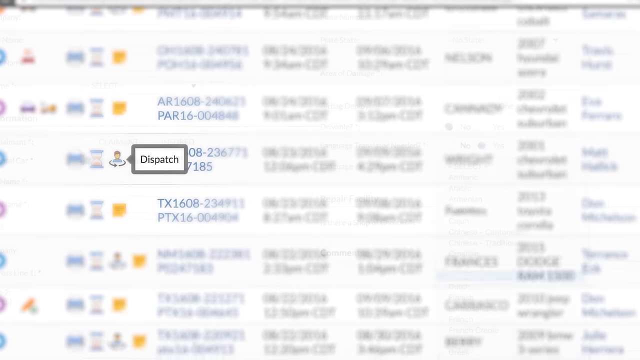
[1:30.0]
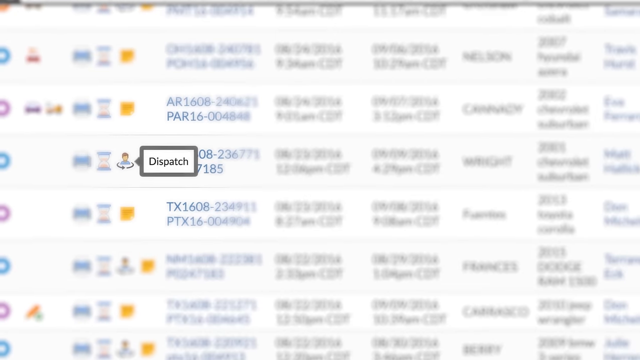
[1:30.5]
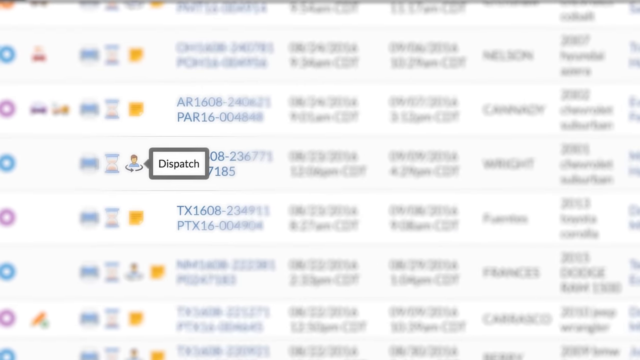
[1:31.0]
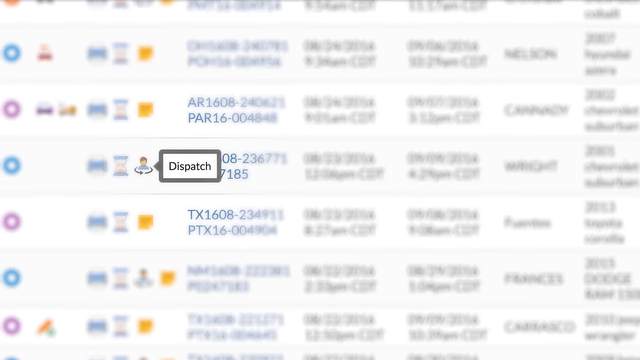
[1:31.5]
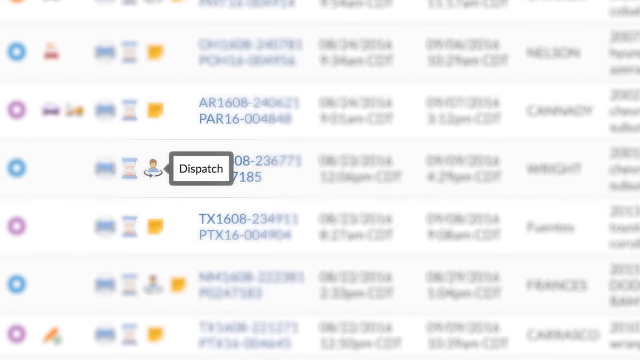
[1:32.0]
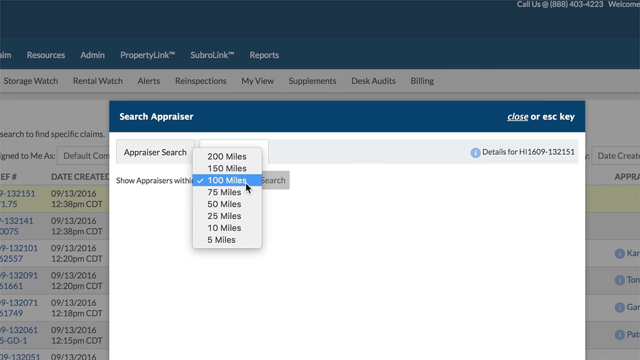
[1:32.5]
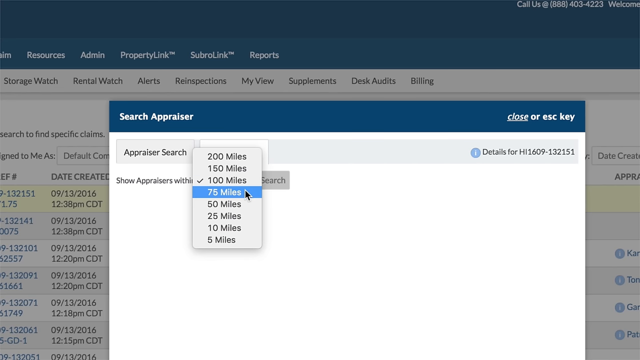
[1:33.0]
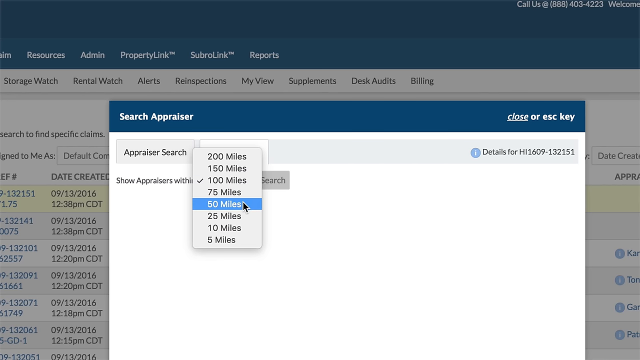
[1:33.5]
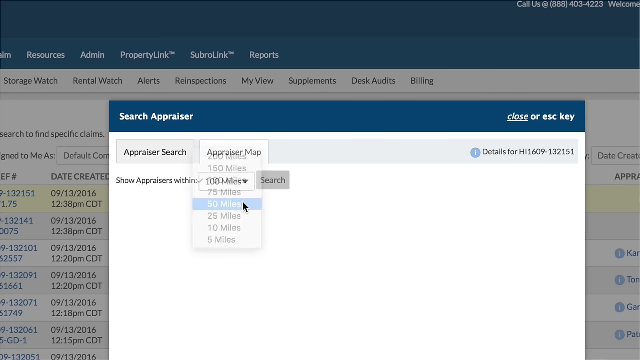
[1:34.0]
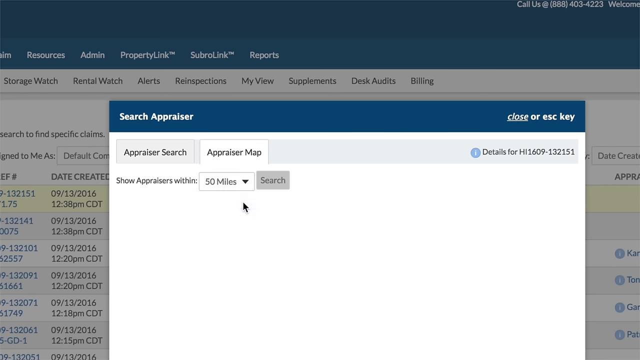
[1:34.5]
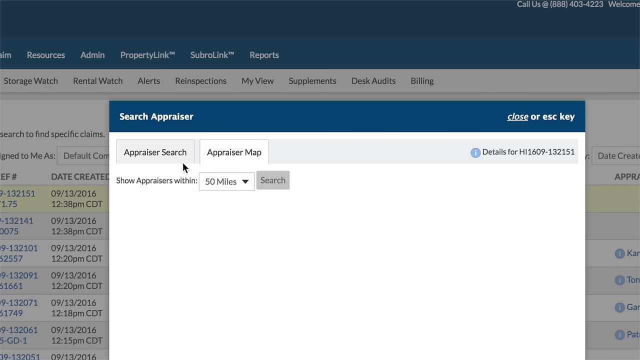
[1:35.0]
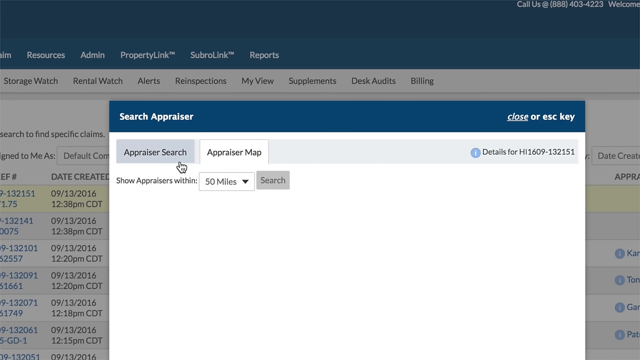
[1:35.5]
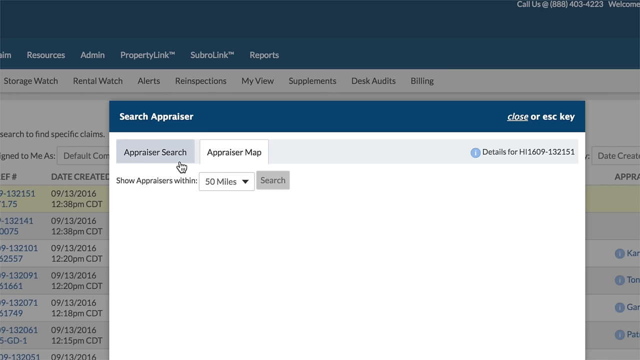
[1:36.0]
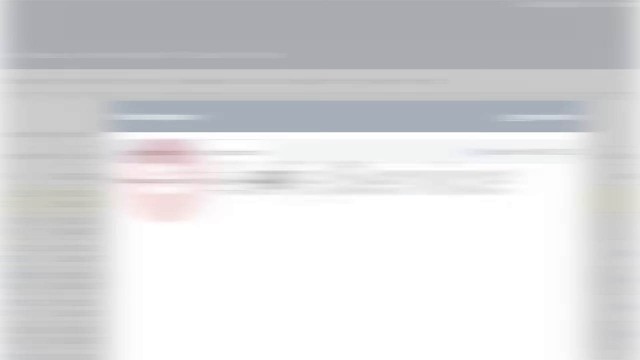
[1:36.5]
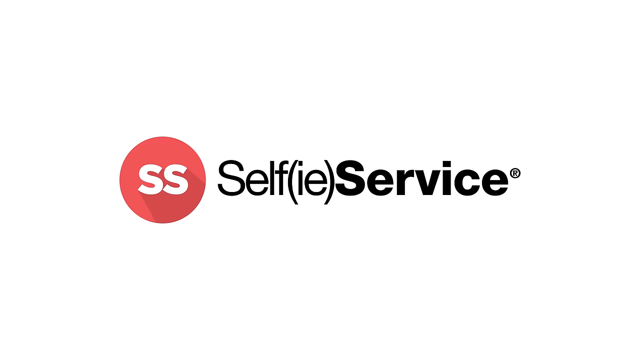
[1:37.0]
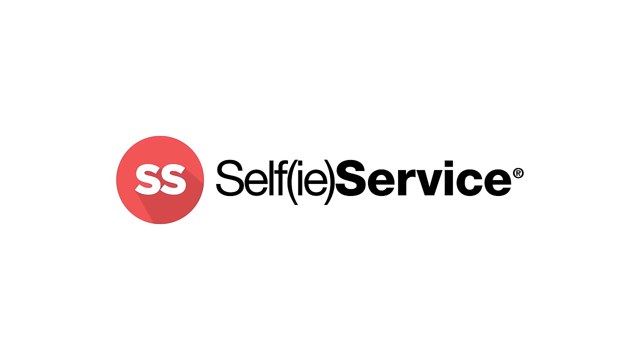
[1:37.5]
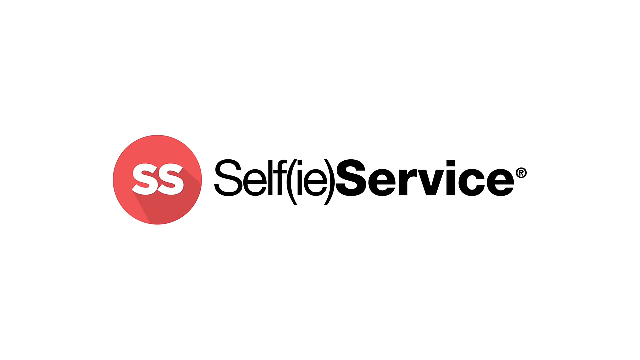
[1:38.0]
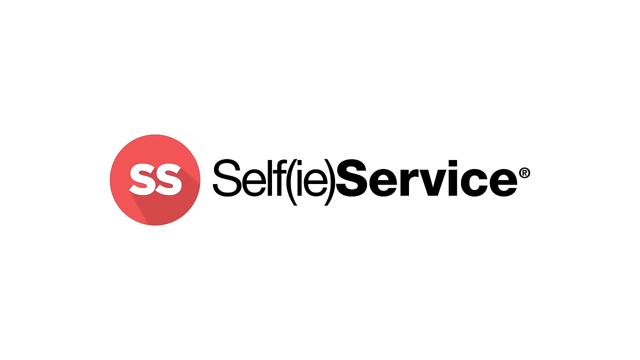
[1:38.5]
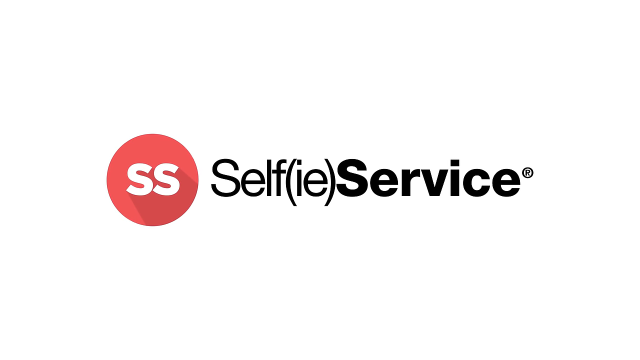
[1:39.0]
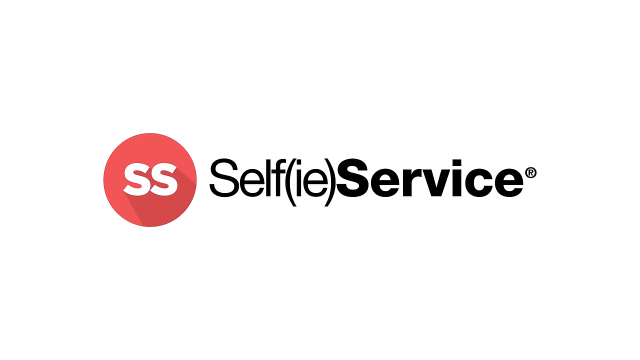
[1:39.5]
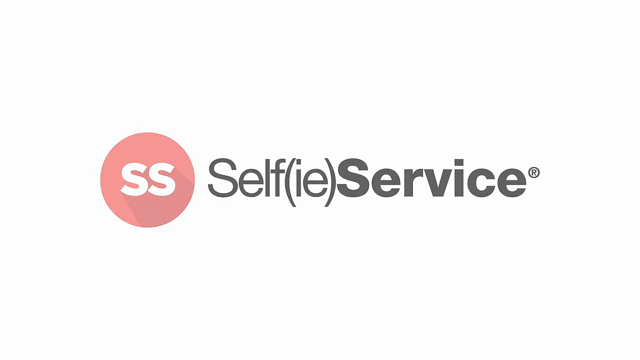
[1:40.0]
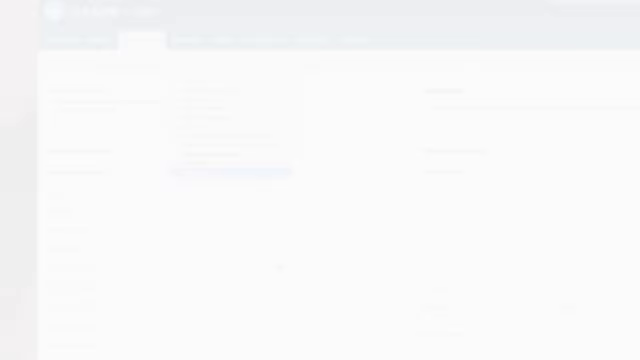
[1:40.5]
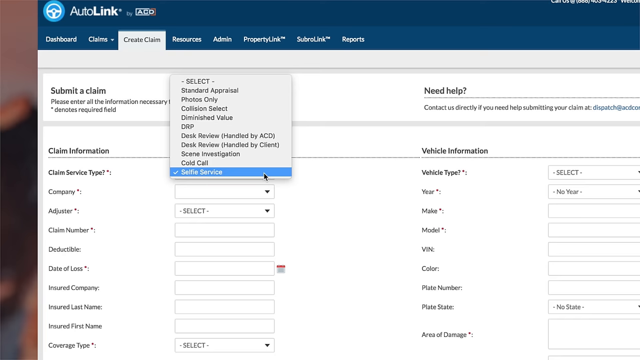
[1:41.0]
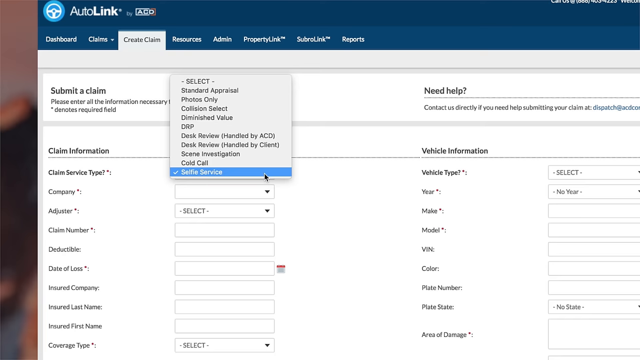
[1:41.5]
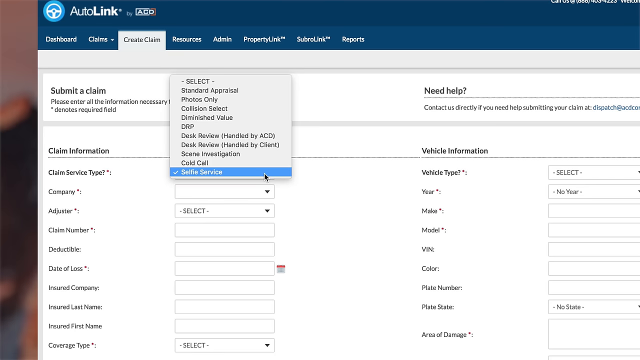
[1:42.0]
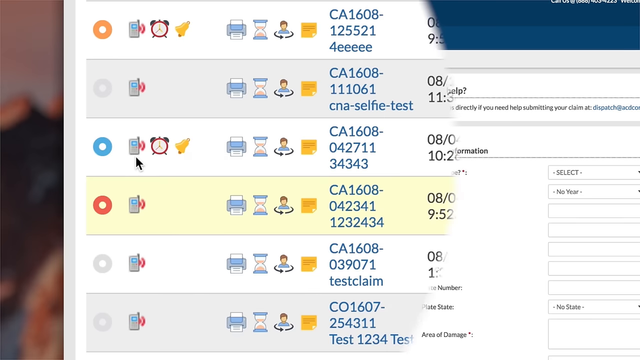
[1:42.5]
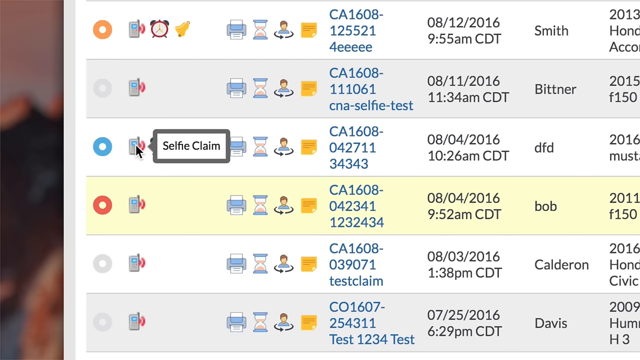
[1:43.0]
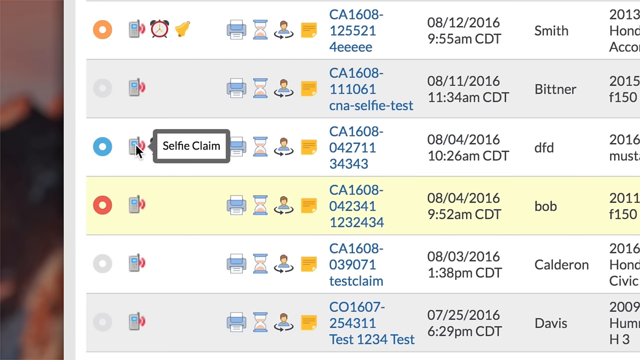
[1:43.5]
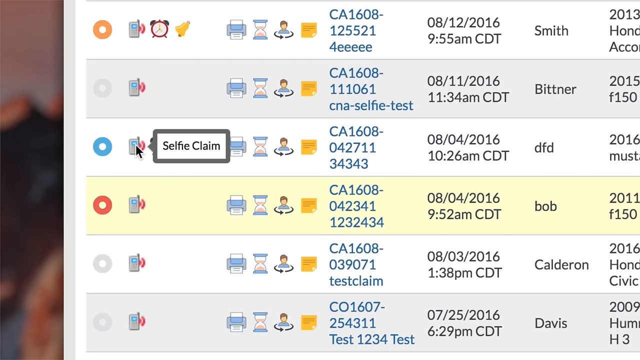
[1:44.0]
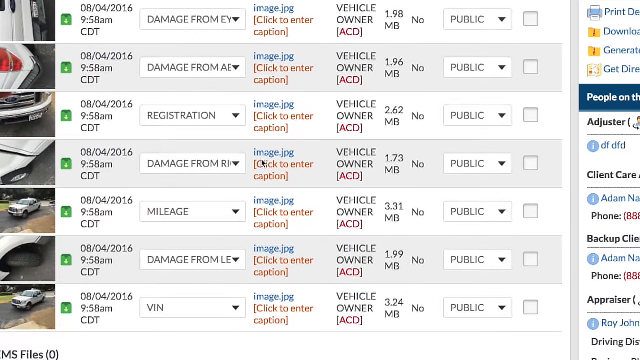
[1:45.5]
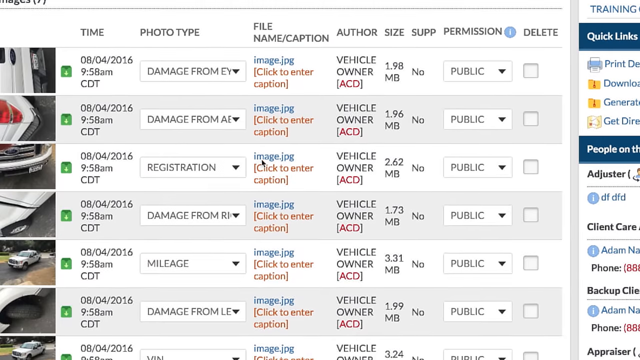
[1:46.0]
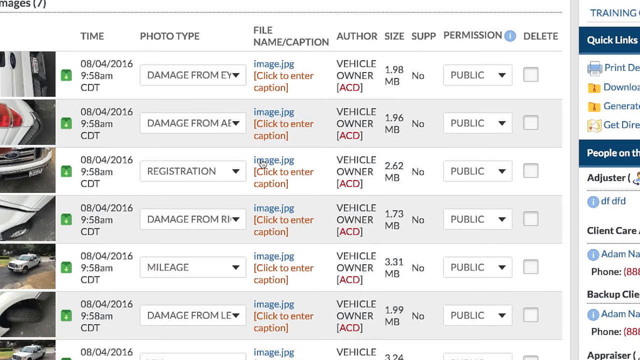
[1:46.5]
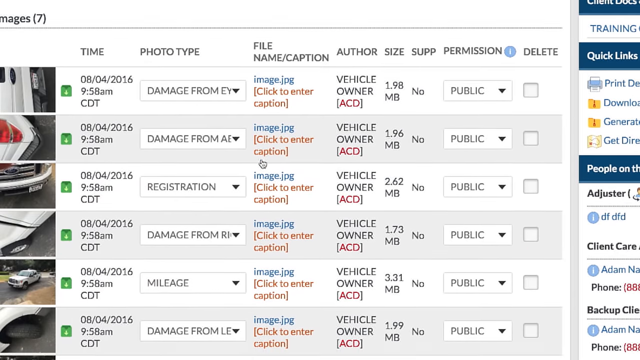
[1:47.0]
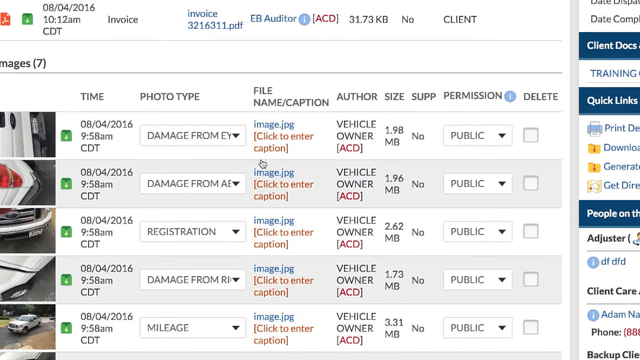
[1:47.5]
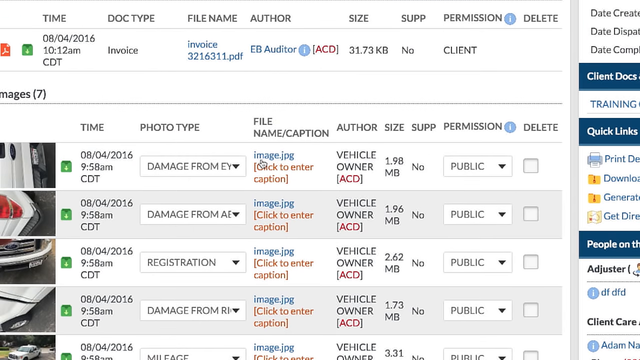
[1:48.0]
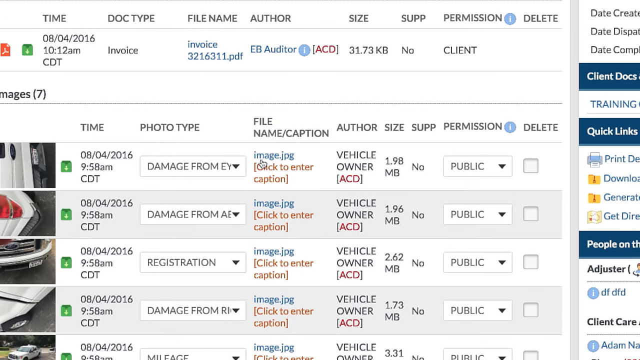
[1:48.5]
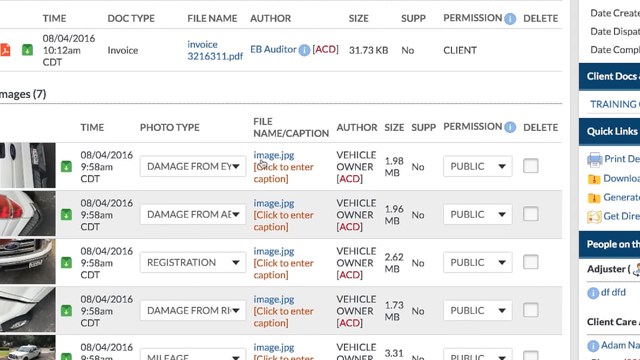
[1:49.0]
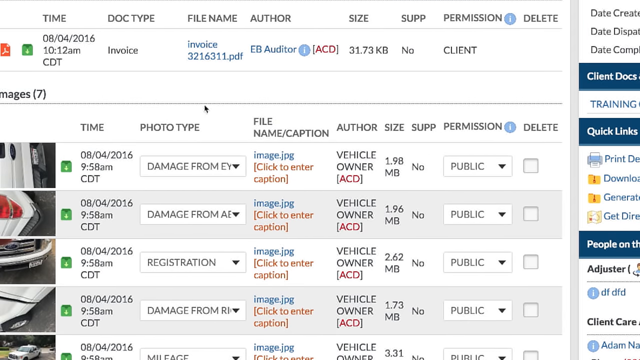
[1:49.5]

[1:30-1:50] The claims list is blurred in the background of the screen, and an icon with a person's head and an arrow around it is highlighted. The screen zooms in so it can be seen more clearly, and then cuts to another menu with "search appraiser" on a blue bar along the top. Under appraiser search, a drop-down box is operated with the options 250 miles, 150 miles, 100 miles, 75 miles, 50 miles, 25 miles, 10 miles, and 5 miles. To the right it says "details for HI 1609-132151". The cursor selects 50 miles and then clicks on appraiser search. It then cuts to a logo of a red circle with the letters "SS" printed in white inside it, and the caption "SELFI(IE) service" in Arial, with "selfie" in standard Arial and "service" in Arial Bold. It then cuts to another view of the AutoLink web page showing the Submit a Claim page, with a drop-down box for Claim Service Type offering the options Standard, Appraisal, Photos Only, Collision Select, Diminished Value, DRP, Desk Review Handled by ACD, Desk Review Handled by Client, Scene Investigation, Cold Call, and Selfie Service. The black arrow cursor selects Selfie Service. A circular wipe then reveals the Claims Handling page and a button: the Selfie Claim icon, which looks like a mobile phone, is highlighted and clicked, and the words "Selfie Claim" come out of the side of the image.